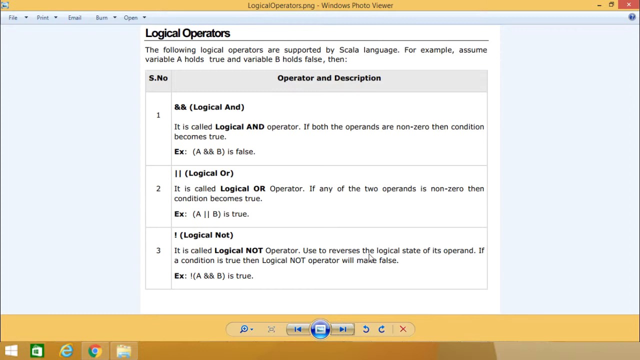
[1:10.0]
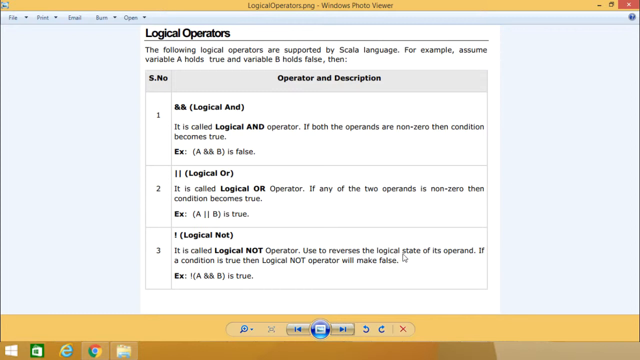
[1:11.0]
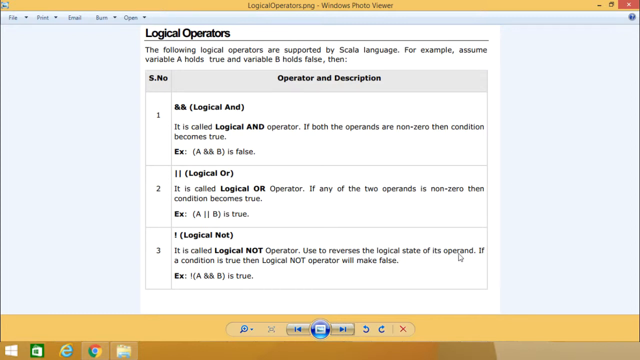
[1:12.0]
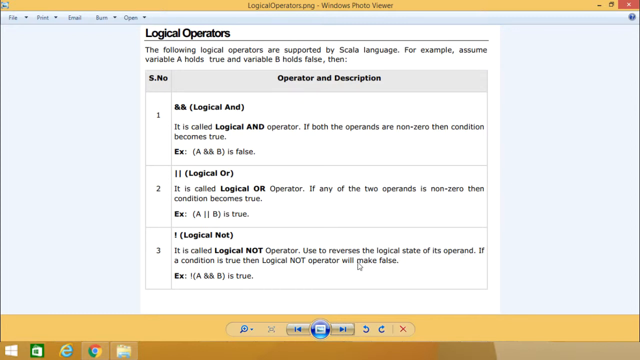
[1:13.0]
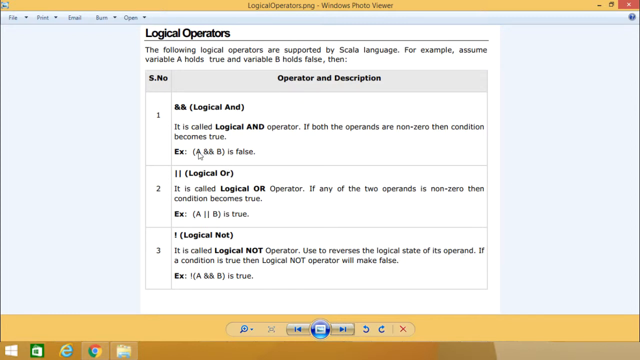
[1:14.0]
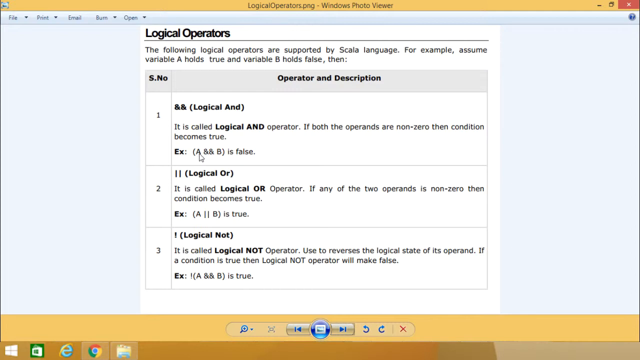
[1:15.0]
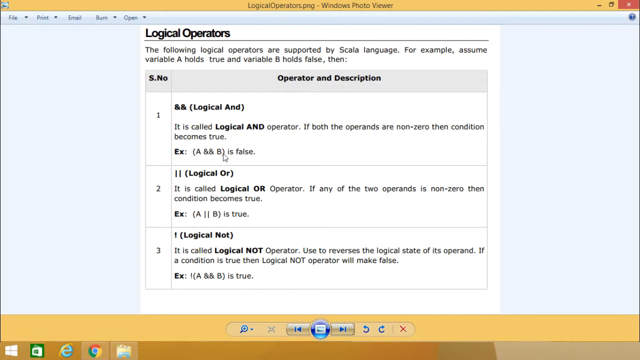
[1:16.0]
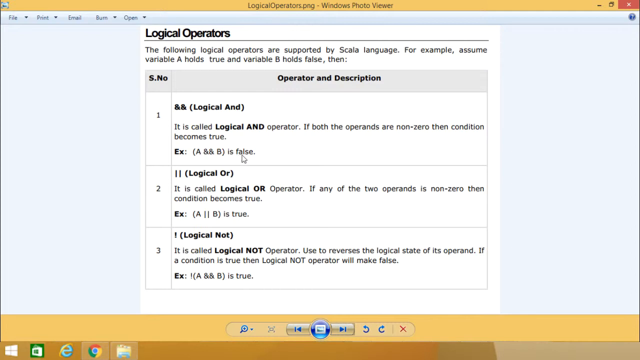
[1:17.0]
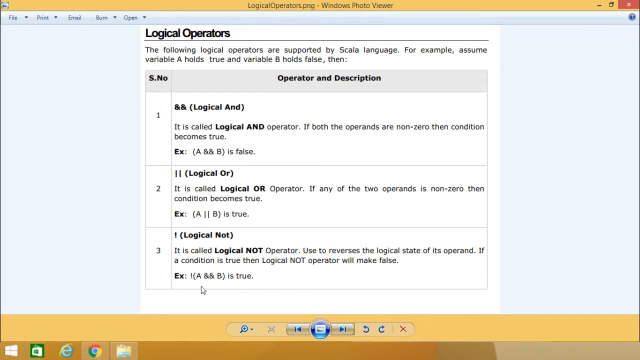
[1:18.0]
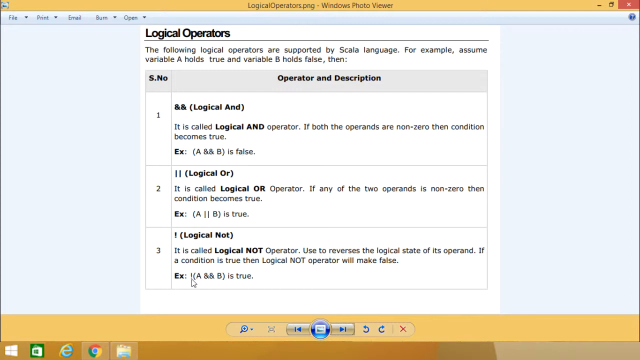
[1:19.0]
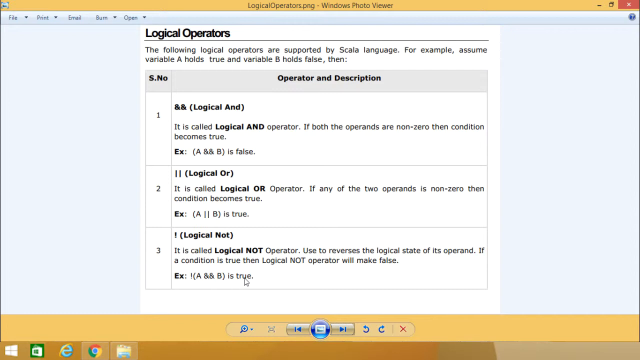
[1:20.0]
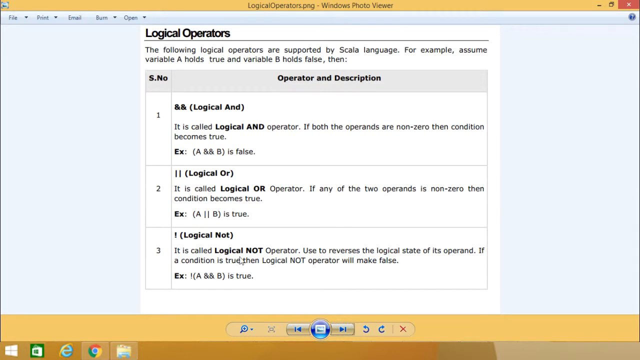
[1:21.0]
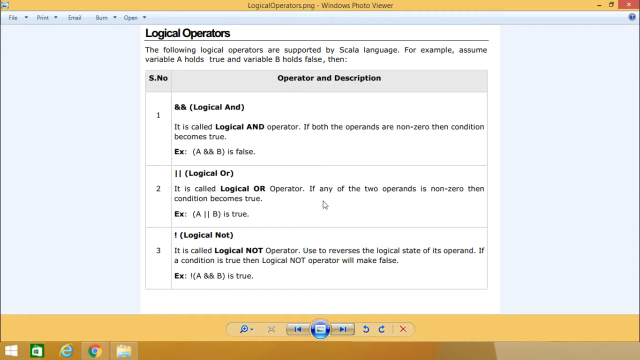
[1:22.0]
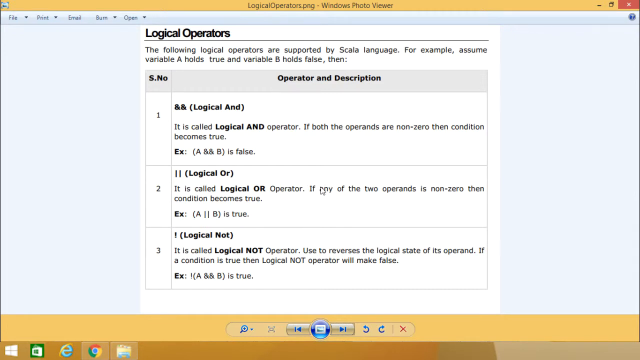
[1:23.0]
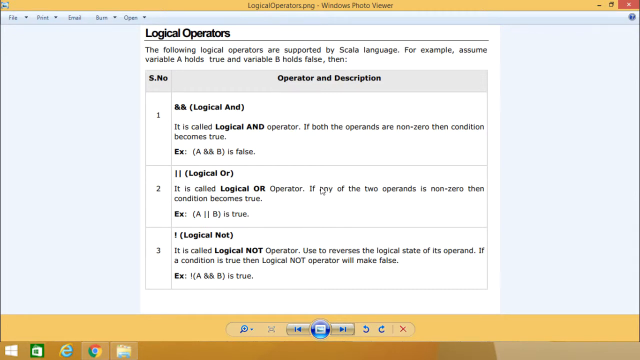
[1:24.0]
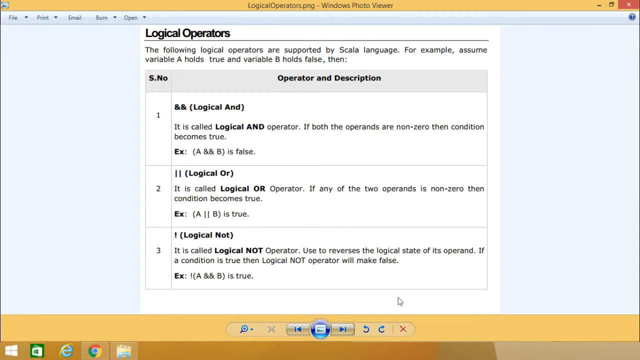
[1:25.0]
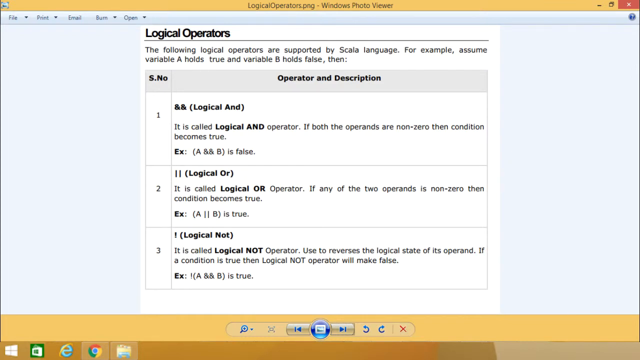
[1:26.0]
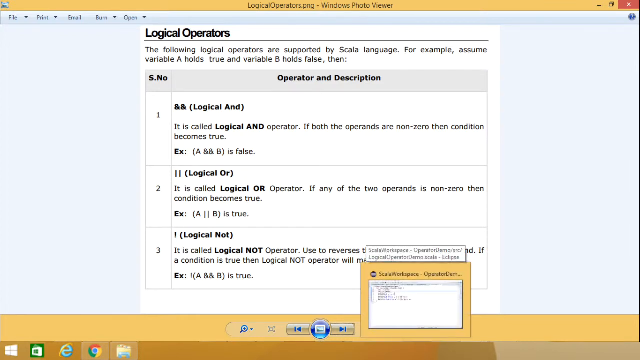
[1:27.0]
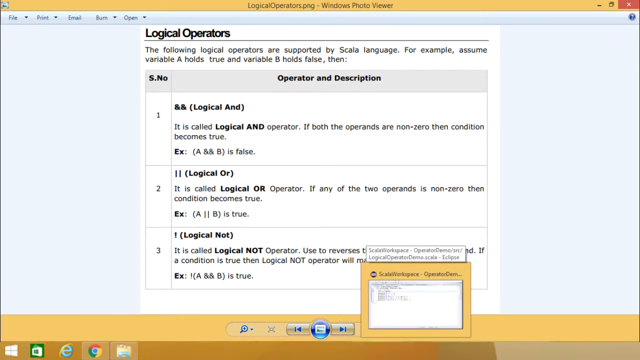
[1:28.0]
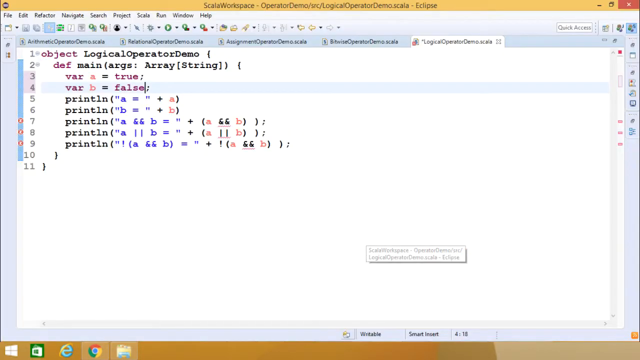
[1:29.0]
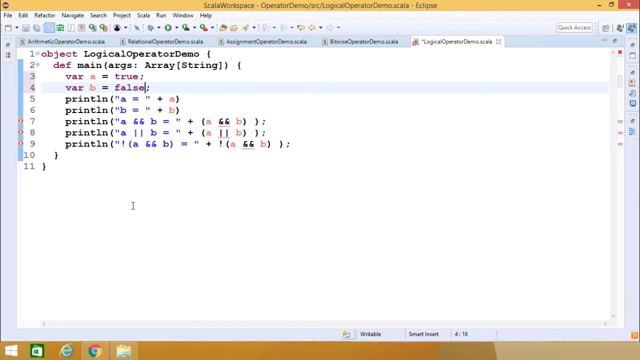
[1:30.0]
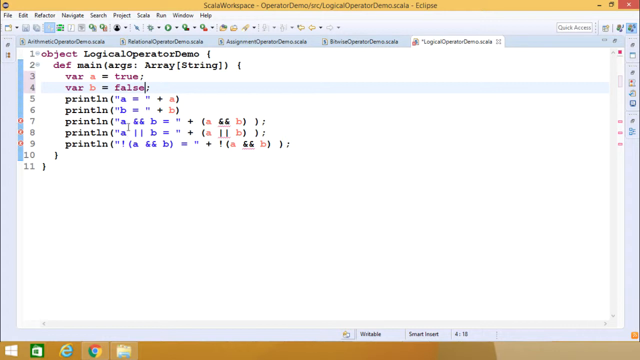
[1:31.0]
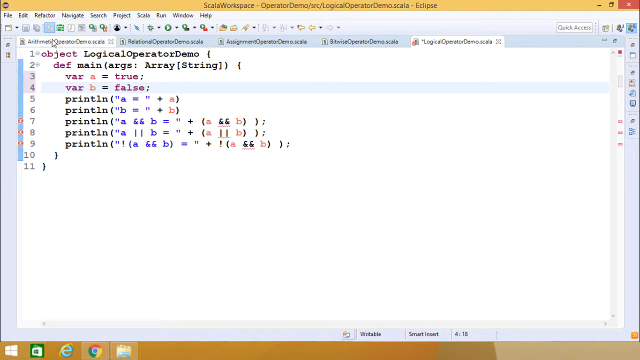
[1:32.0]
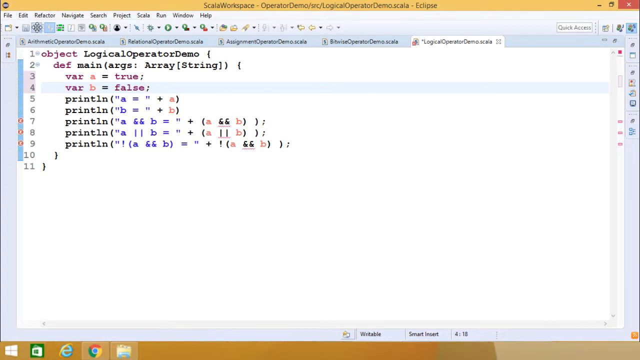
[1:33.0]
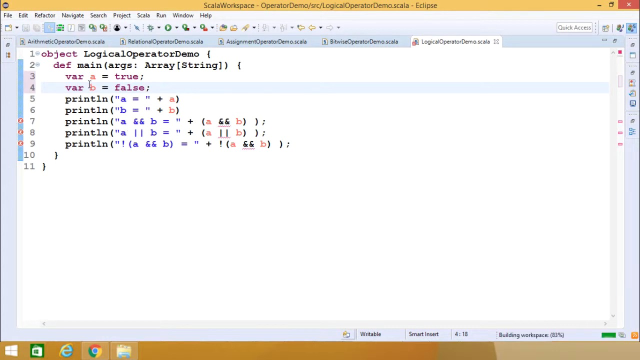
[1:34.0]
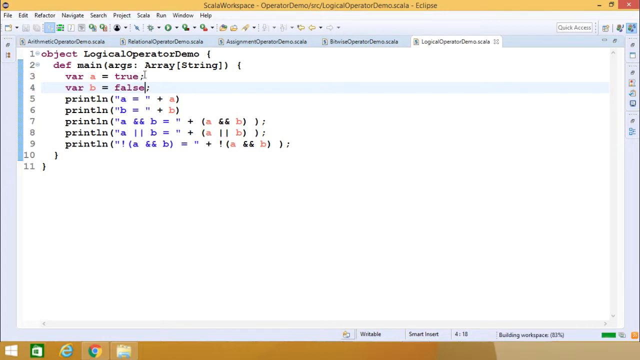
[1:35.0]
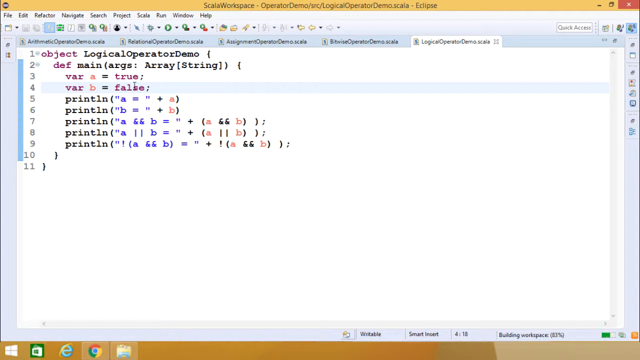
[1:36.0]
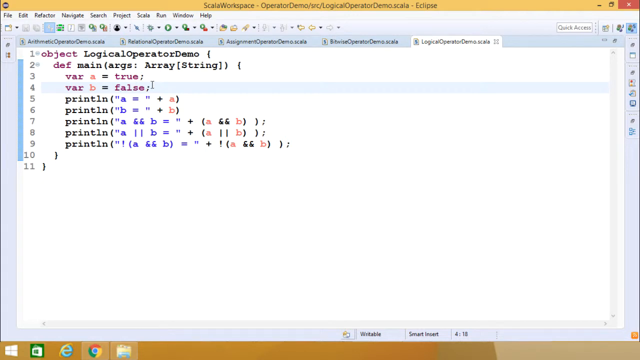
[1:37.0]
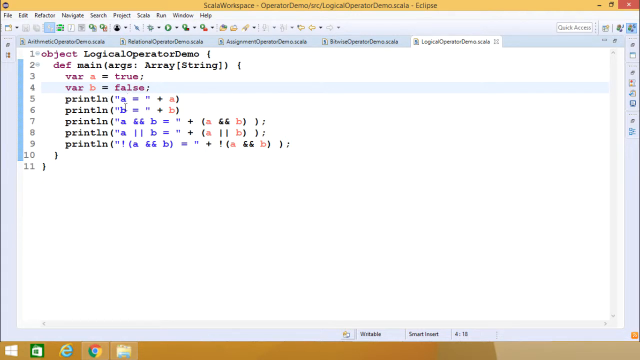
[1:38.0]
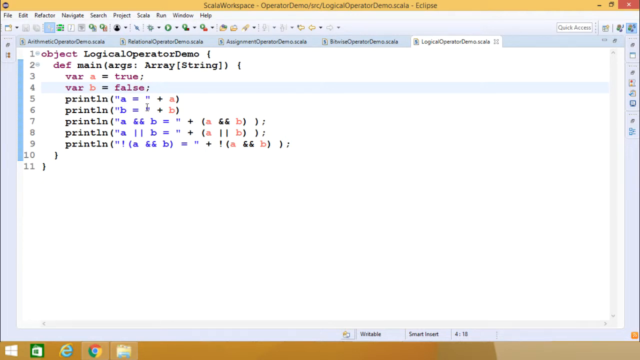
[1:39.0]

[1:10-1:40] The tutorial covers the logical not operator, represented by an exclamation point. Its description states that it is used to reverse the logical state of its operand, so that if a condition is true, the logical not operator makes it false. In the example, the exclamation point is placed in front of A logical and B, which makes it true.